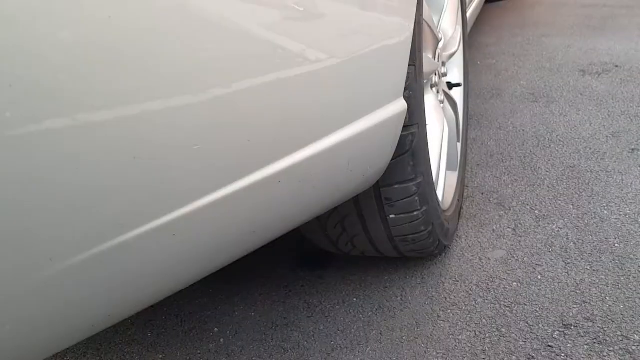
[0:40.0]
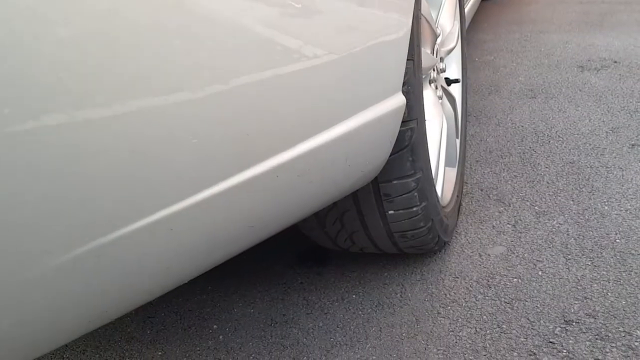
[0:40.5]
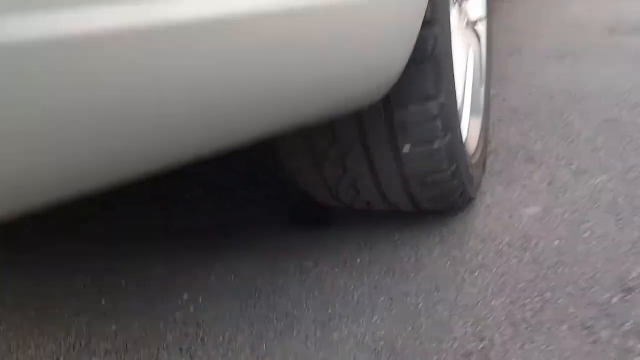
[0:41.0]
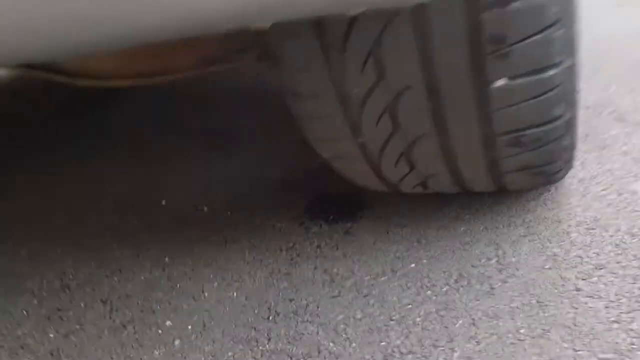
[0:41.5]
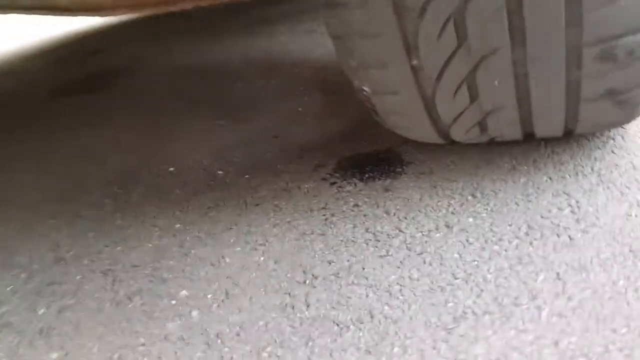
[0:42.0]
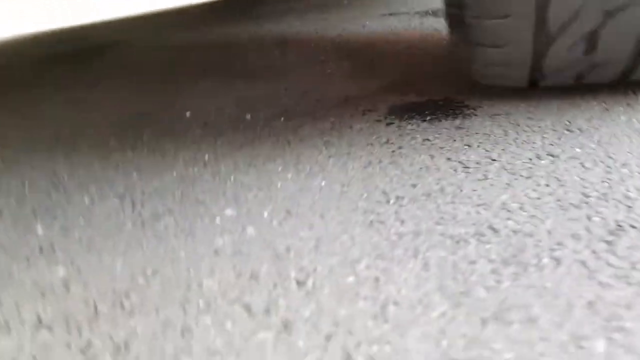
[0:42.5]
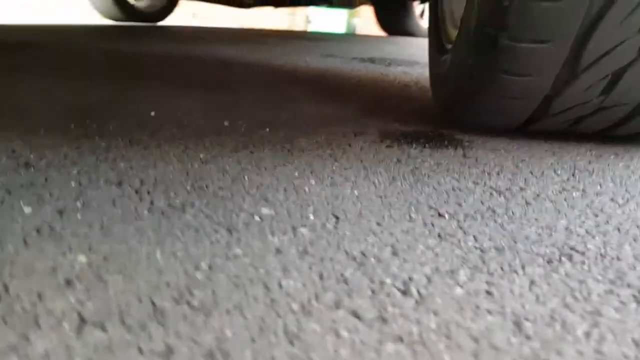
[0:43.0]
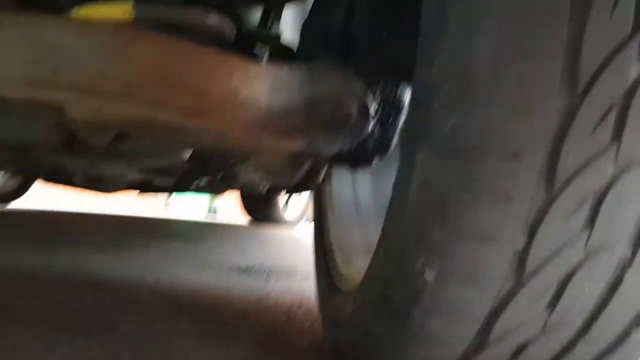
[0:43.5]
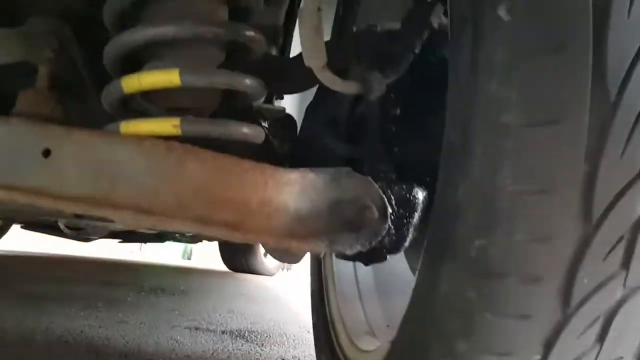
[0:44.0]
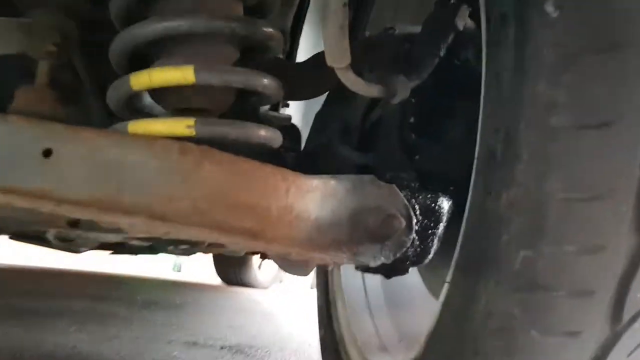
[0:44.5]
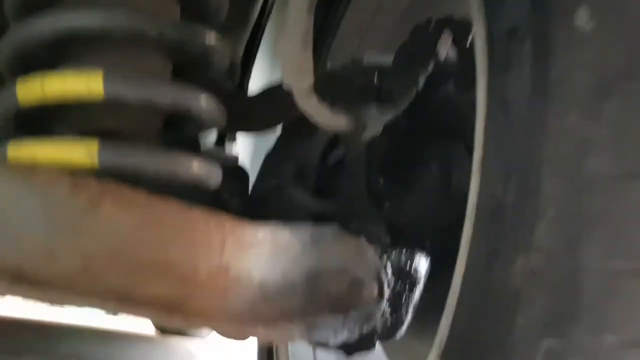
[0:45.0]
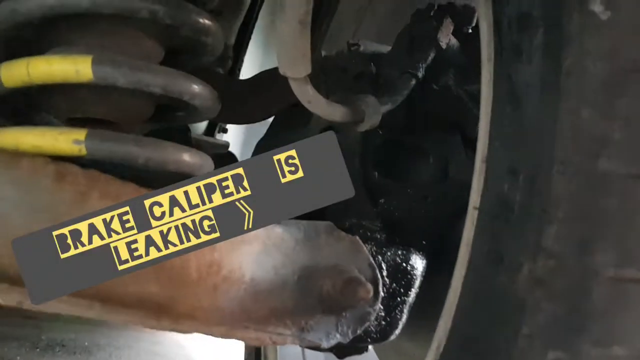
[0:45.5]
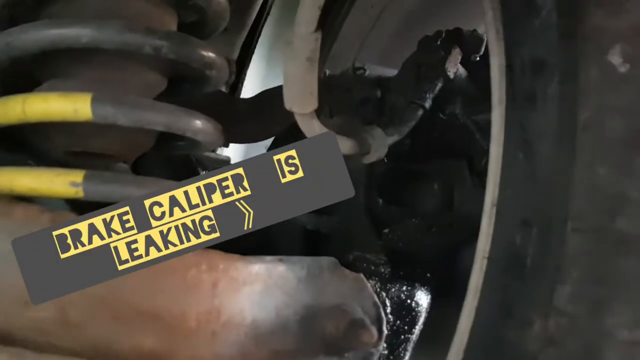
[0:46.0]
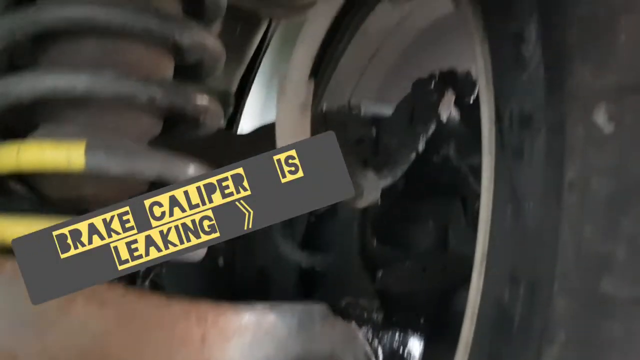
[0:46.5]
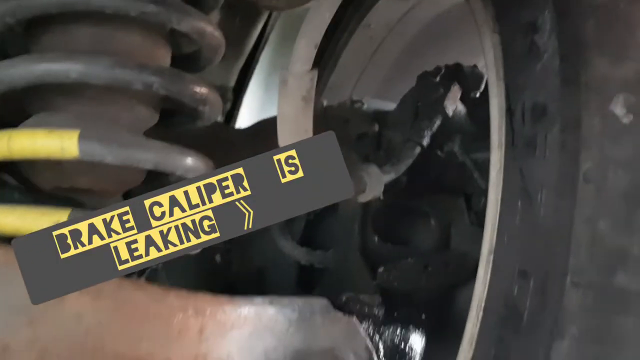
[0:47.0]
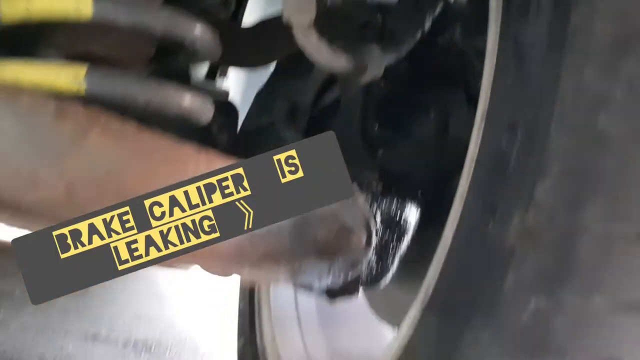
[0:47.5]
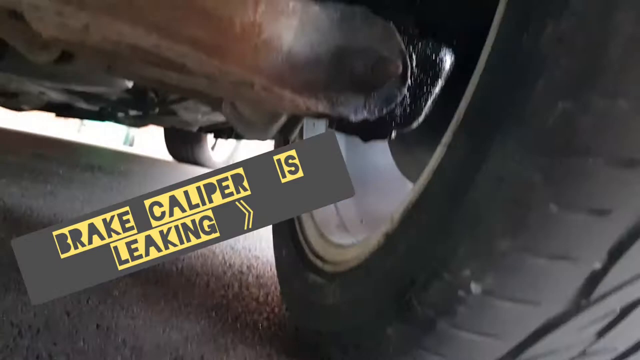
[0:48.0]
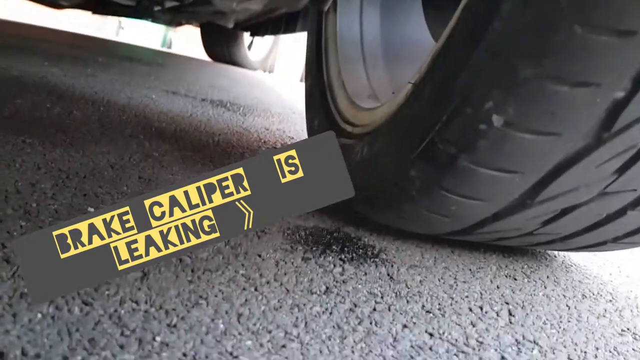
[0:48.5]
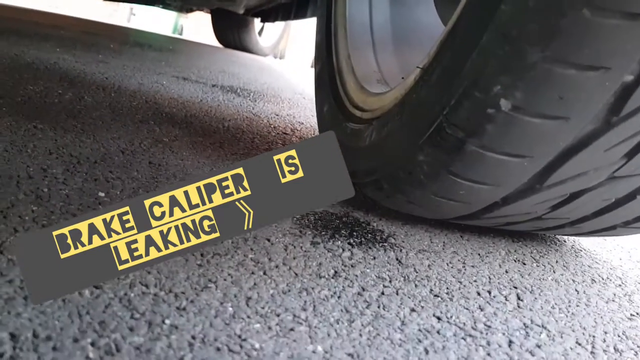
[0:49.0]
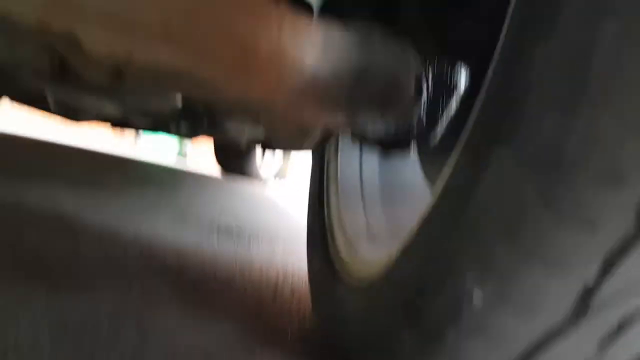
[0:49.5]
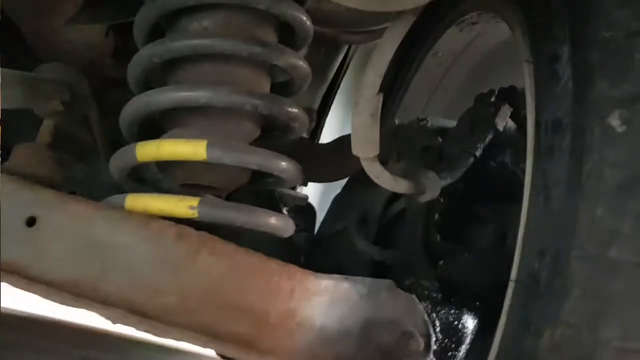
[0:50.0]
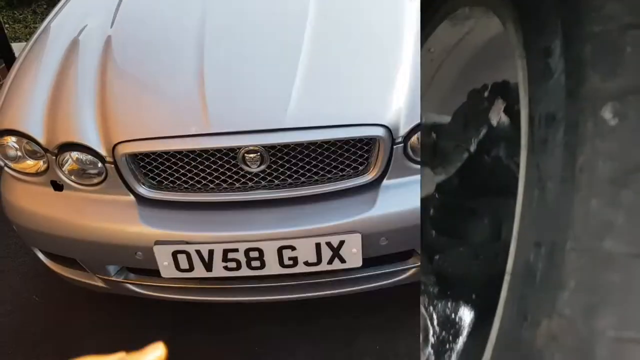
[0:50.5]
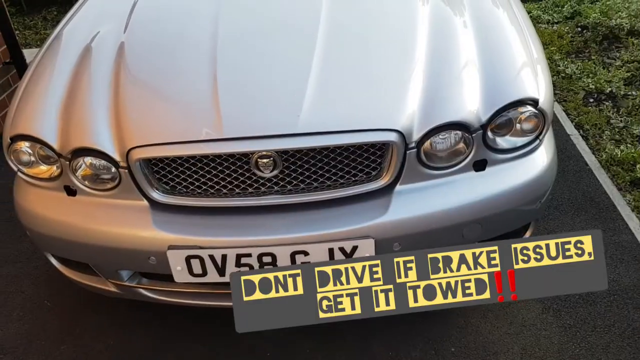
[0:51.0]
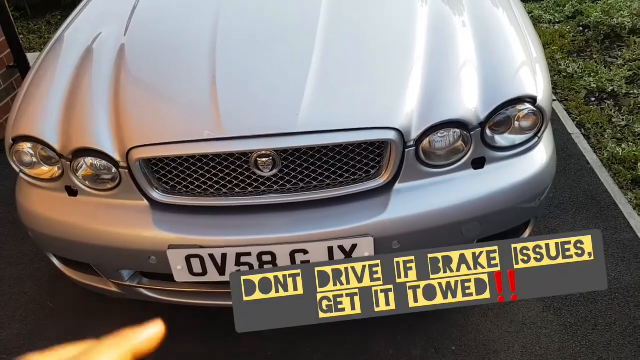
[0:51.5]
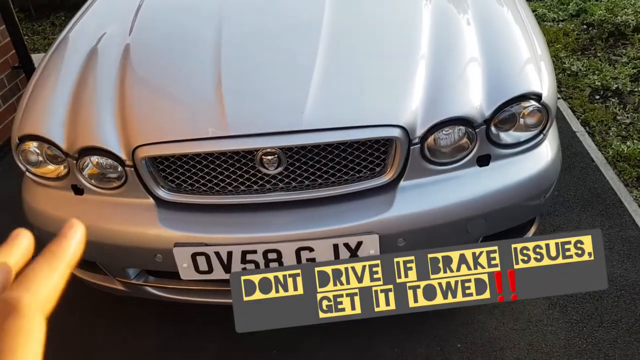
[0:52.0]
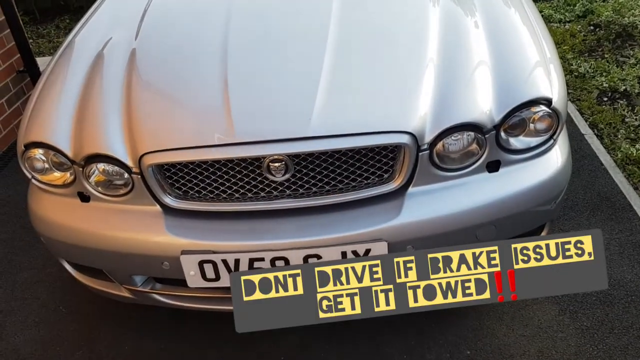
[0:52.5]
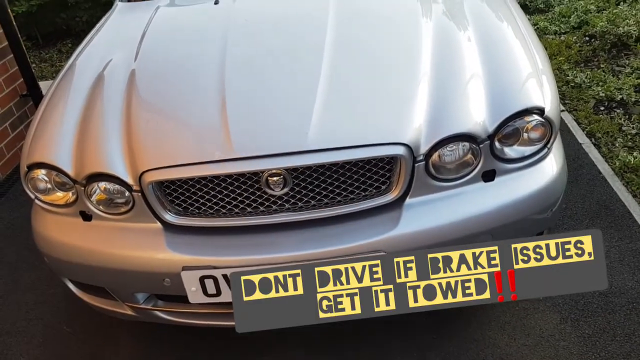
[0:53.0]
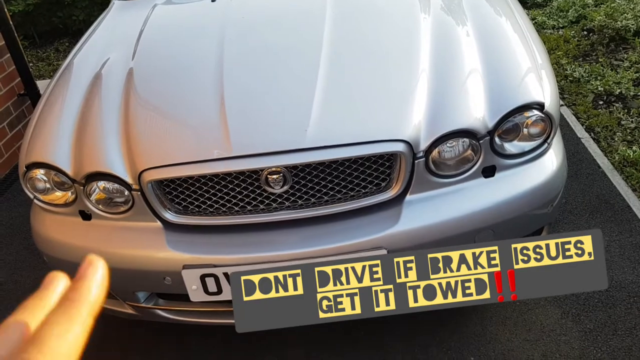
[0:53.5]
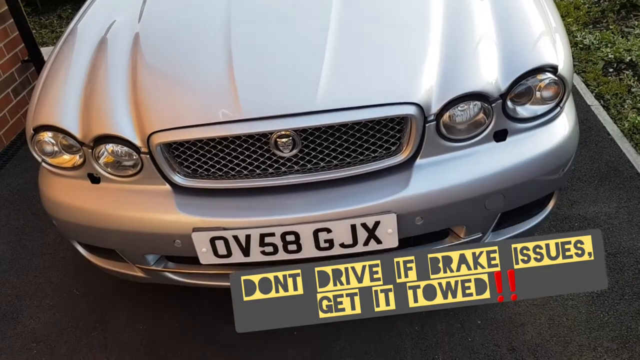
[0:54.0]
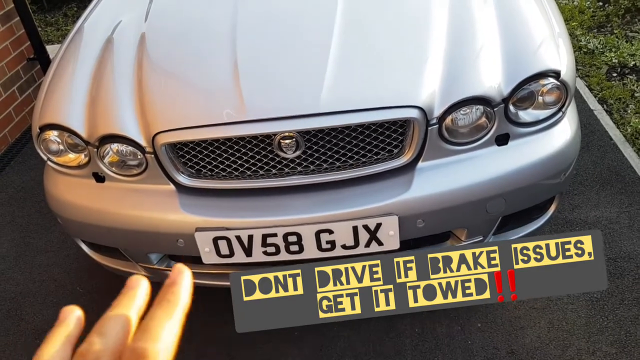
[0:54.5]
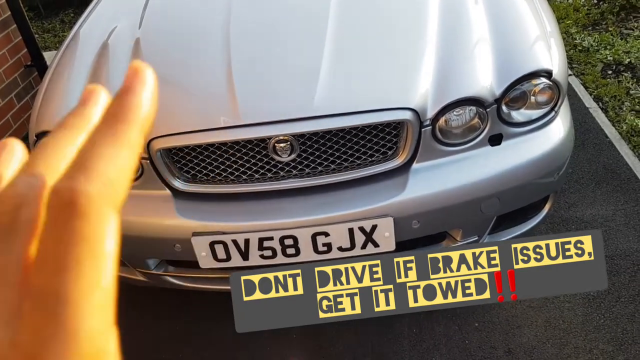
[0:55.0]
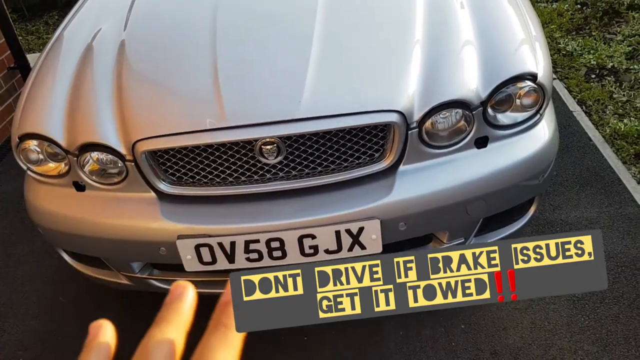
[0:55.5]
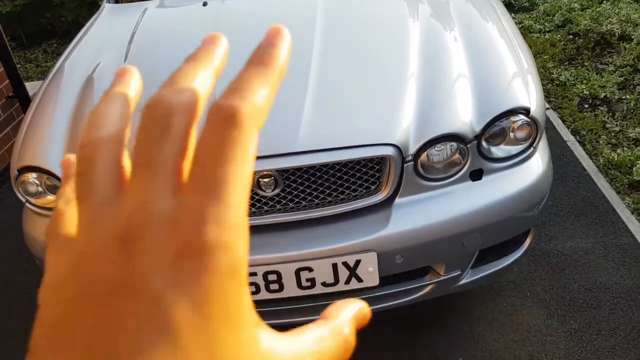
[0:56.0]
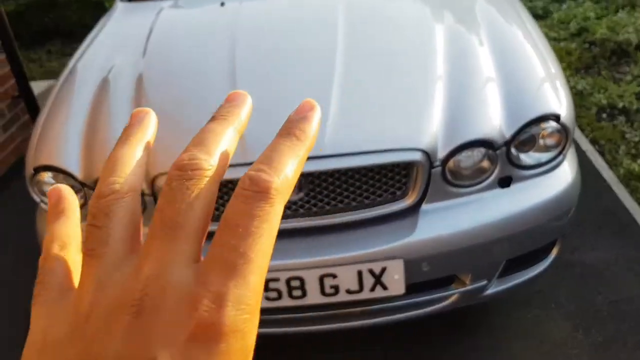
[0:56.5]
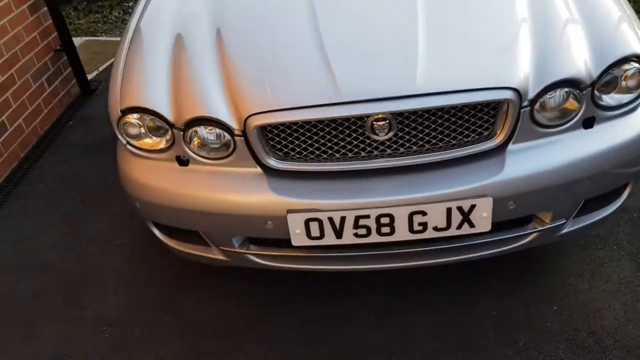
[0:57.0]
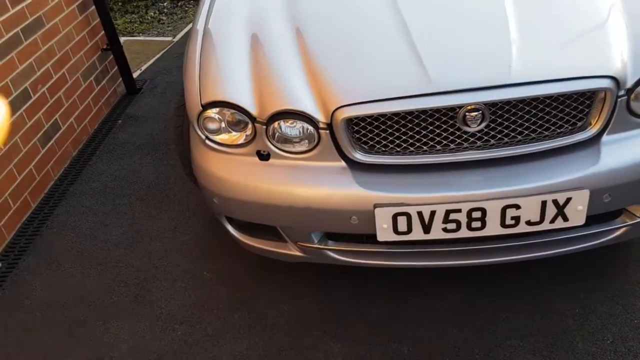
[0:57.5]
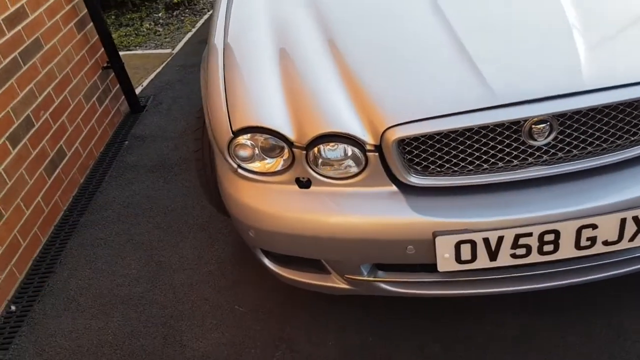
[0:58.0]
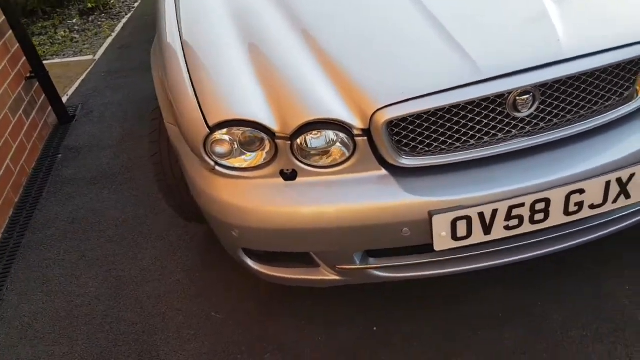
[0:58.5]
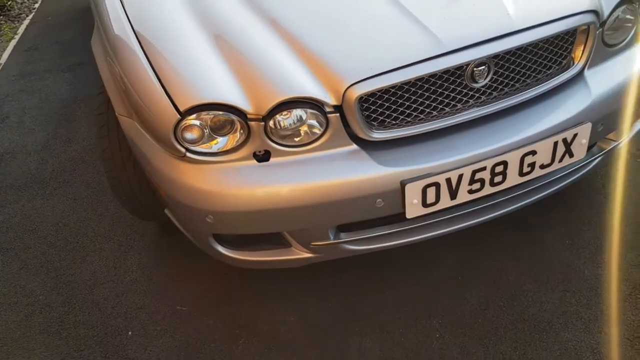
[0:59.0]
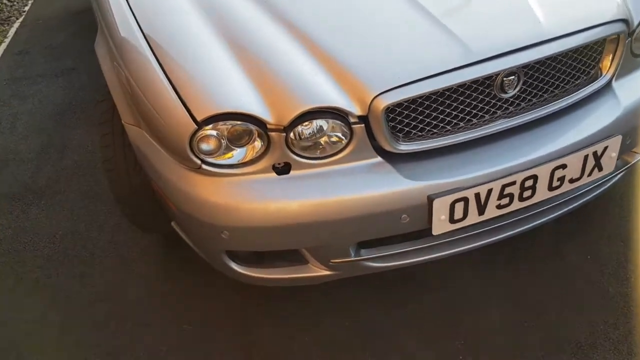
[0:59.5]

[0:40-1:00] The exterior of a white car sitting on the pavement is shown, including a tire and a chrome rim. The camera zooms in underneath the car to the left side of the tire, then up to the suspension area with the springs. The words "brake caliper is leaking" appear on the left side in a tilted gray rectangular box. The camera moves downward to the area beside the tire and back up again. The scene switches to the front of the car, showing the hood closed, with the words "don't drive if brake issues, get it towed". The person's hand moves up and down as if they are talking and explaining something, and the camera slowly moves to the left as they walk around toward the passenger side of the car.